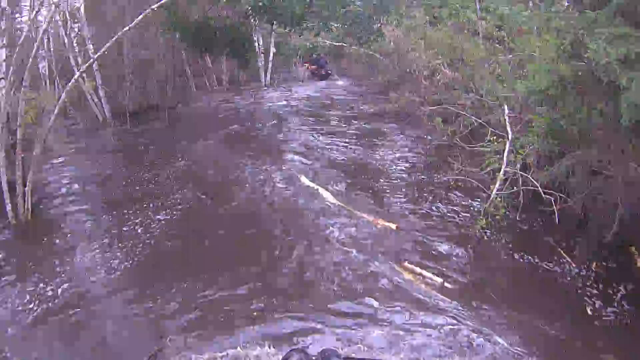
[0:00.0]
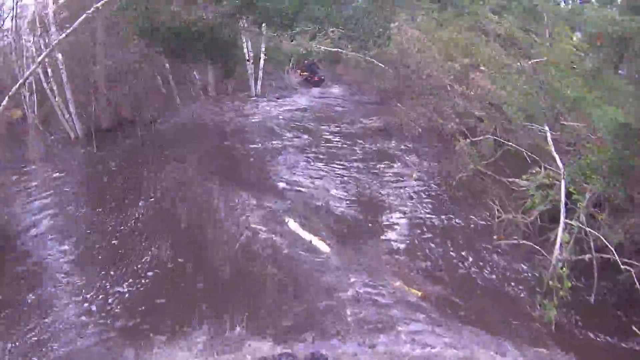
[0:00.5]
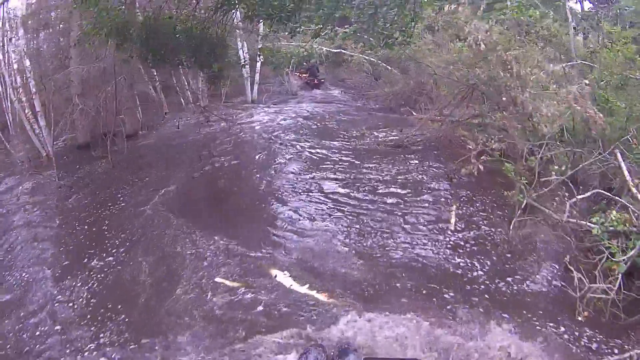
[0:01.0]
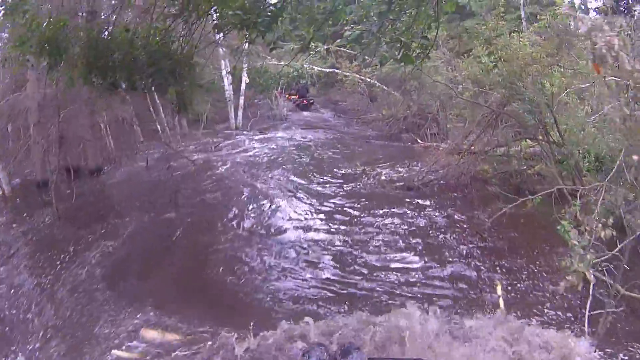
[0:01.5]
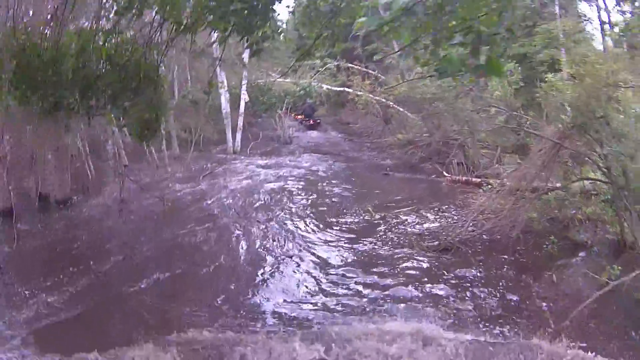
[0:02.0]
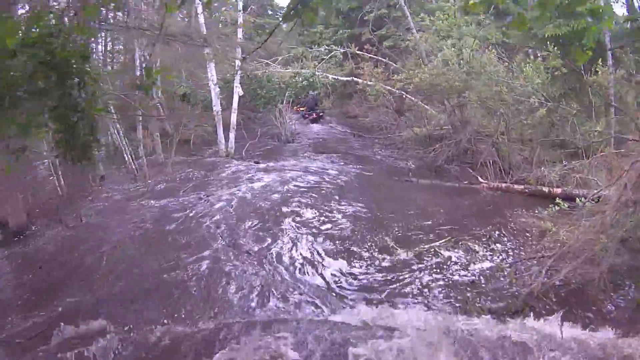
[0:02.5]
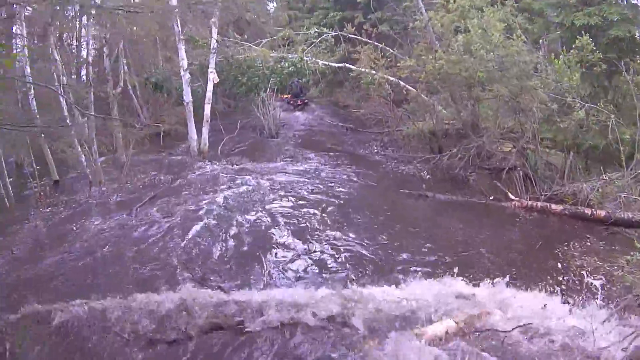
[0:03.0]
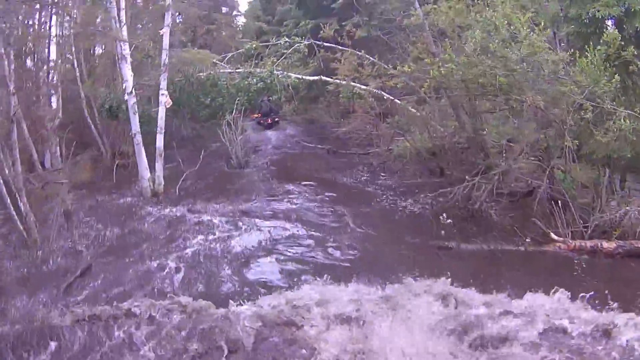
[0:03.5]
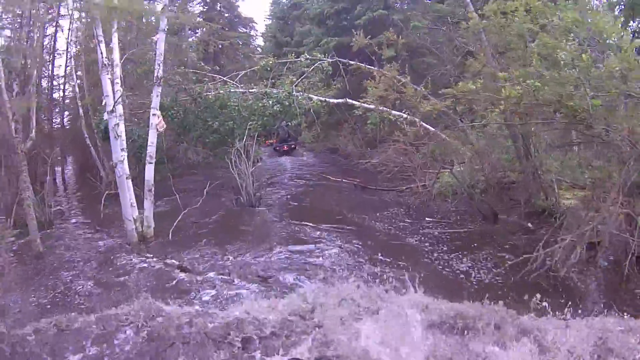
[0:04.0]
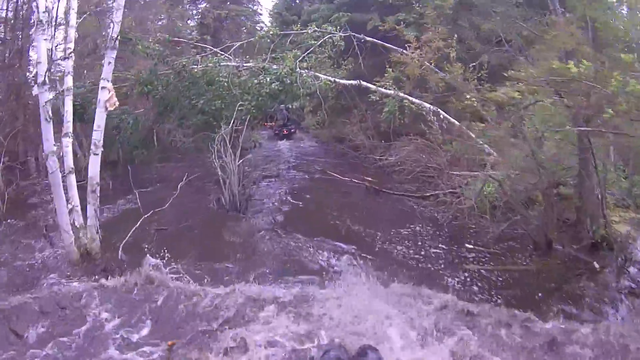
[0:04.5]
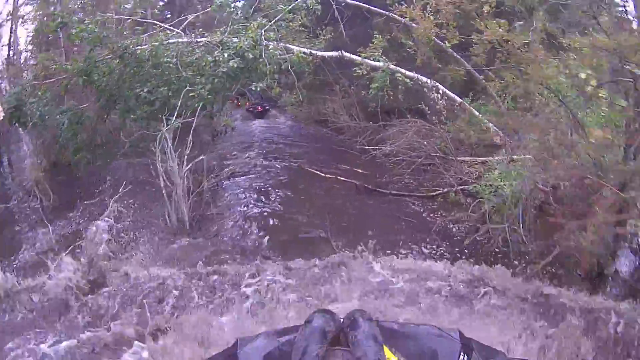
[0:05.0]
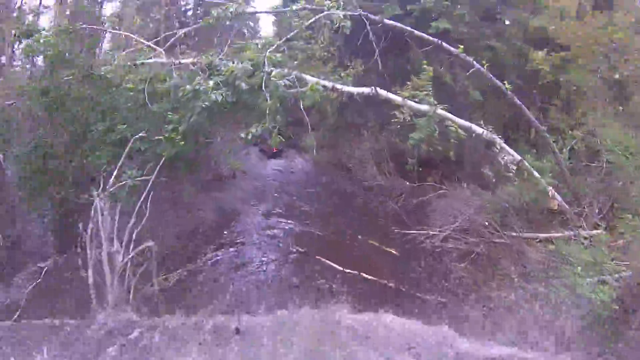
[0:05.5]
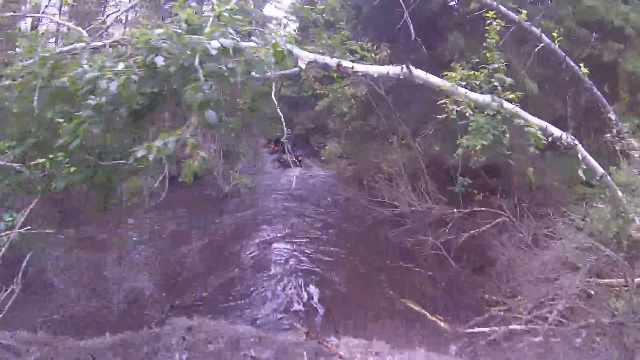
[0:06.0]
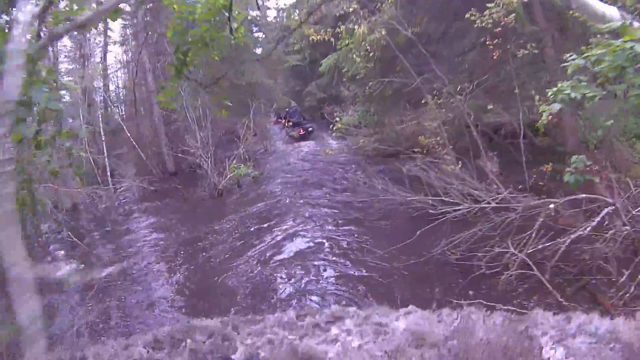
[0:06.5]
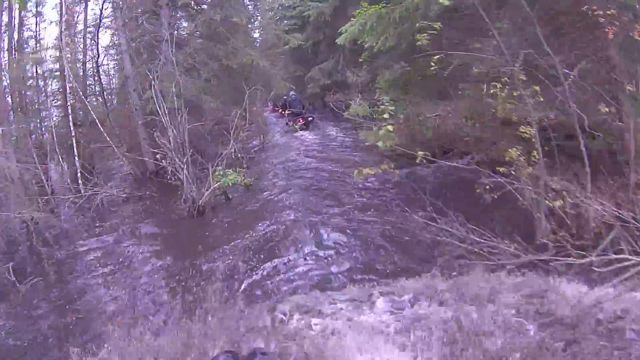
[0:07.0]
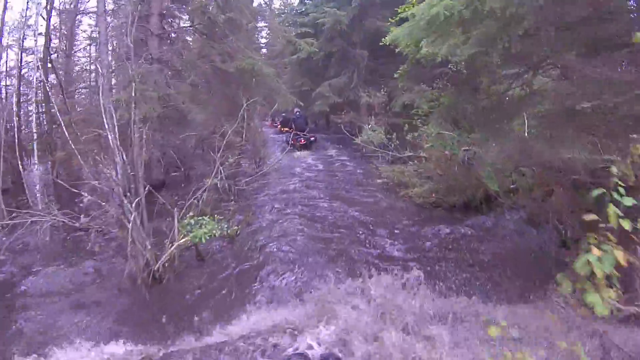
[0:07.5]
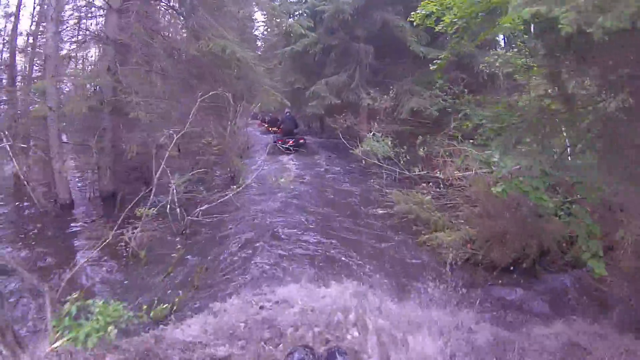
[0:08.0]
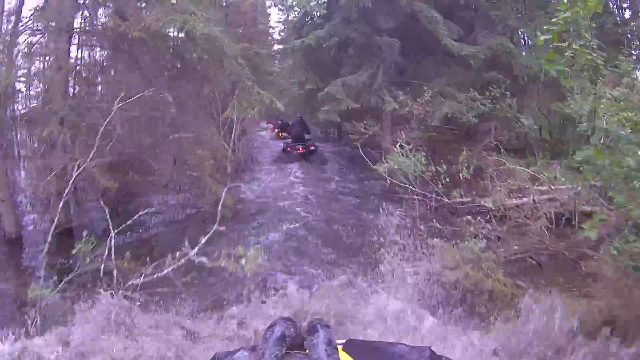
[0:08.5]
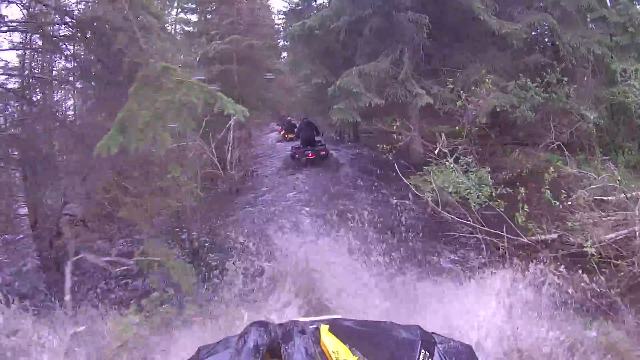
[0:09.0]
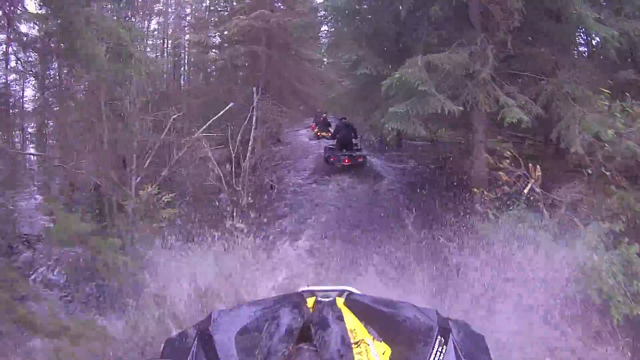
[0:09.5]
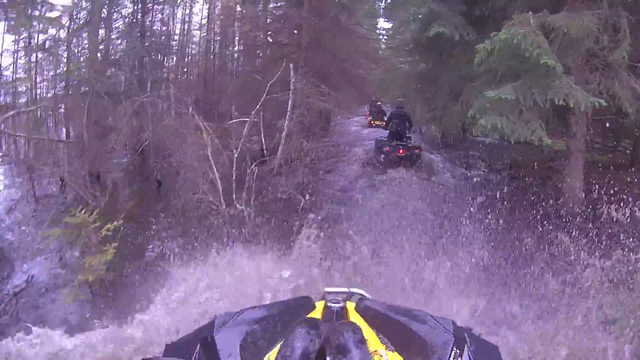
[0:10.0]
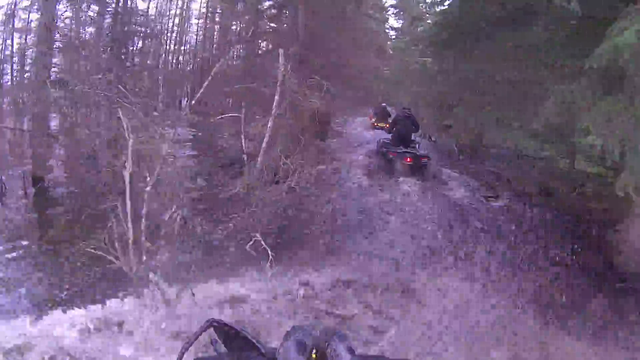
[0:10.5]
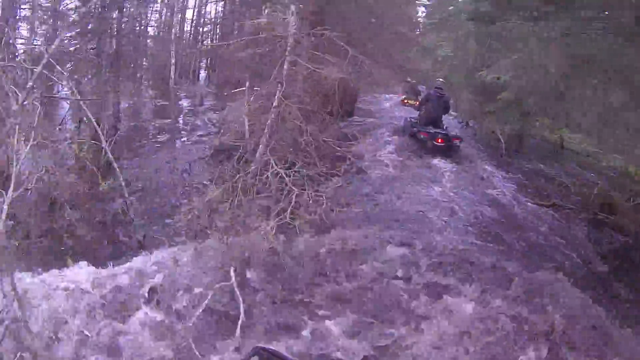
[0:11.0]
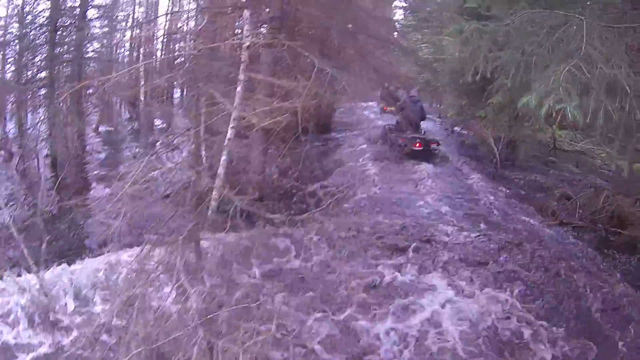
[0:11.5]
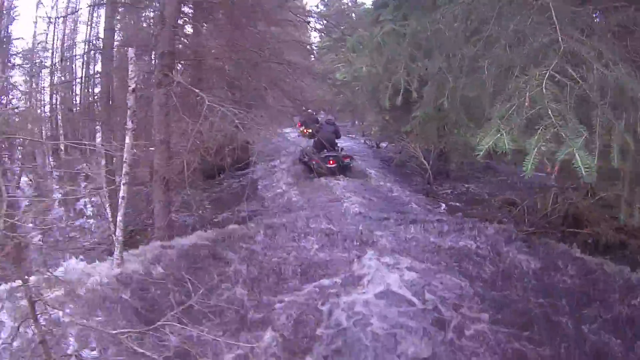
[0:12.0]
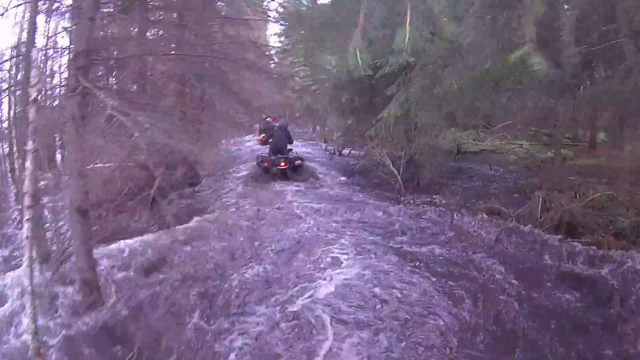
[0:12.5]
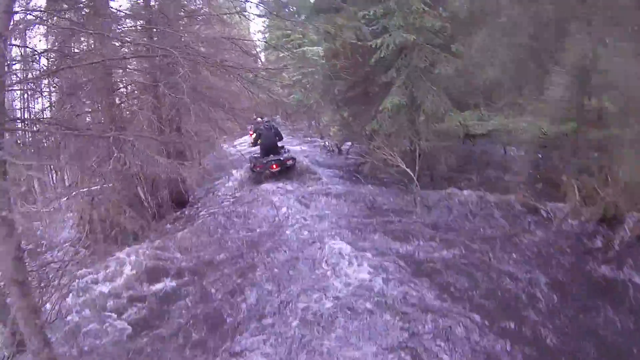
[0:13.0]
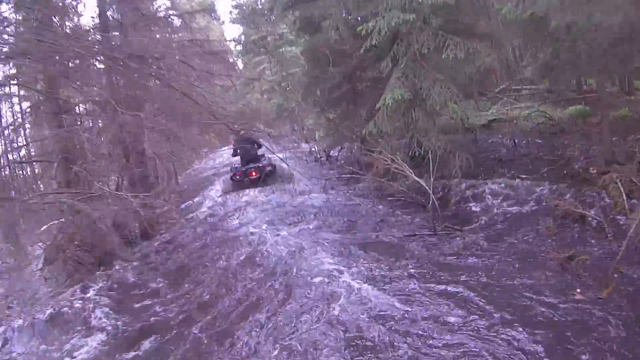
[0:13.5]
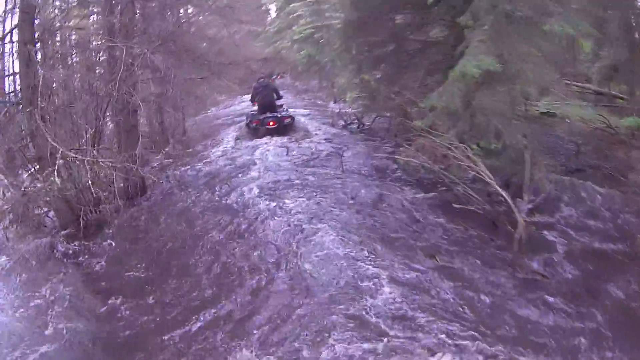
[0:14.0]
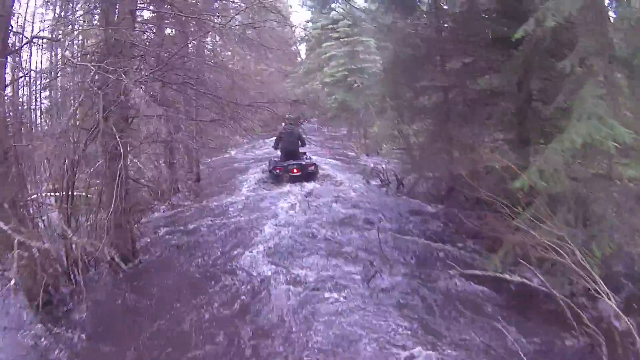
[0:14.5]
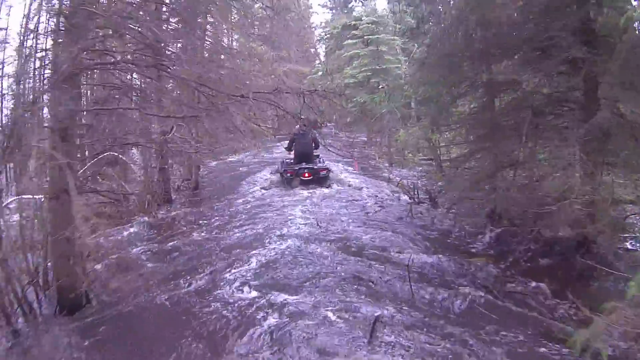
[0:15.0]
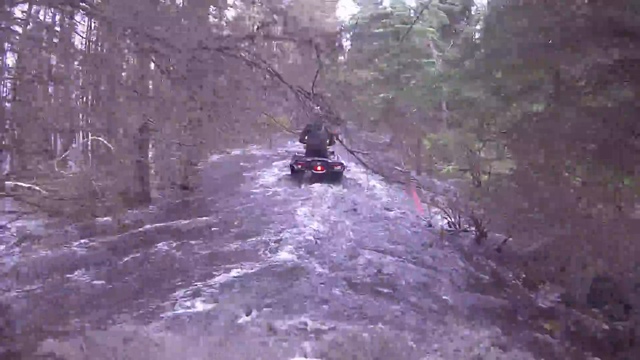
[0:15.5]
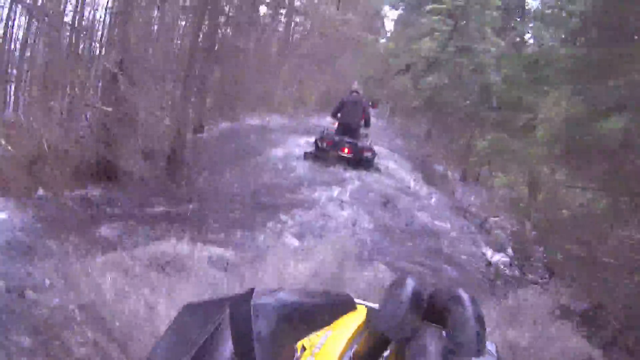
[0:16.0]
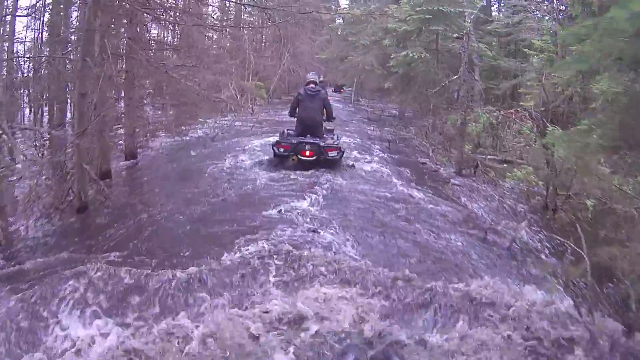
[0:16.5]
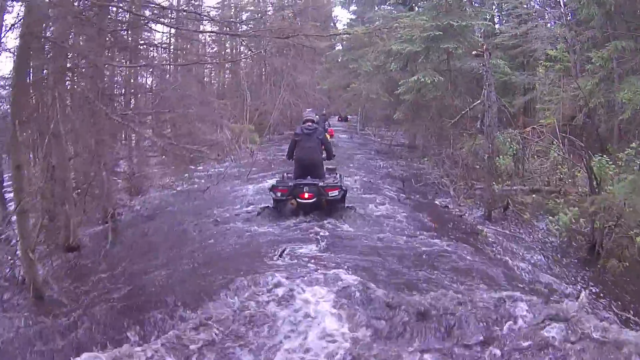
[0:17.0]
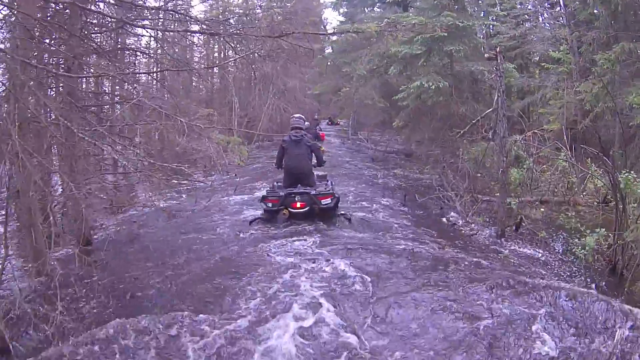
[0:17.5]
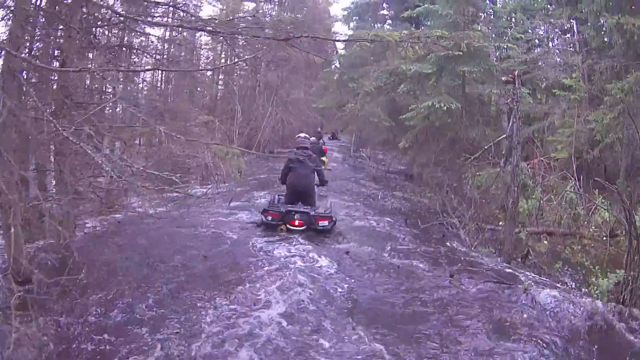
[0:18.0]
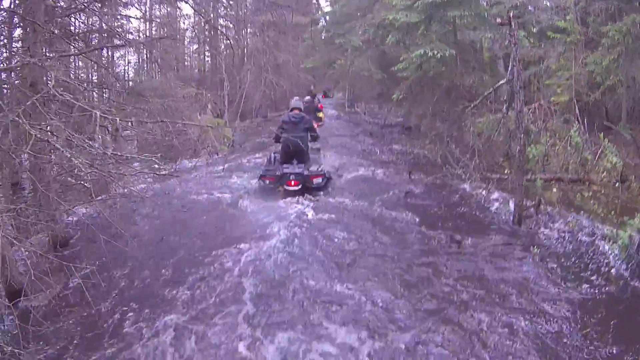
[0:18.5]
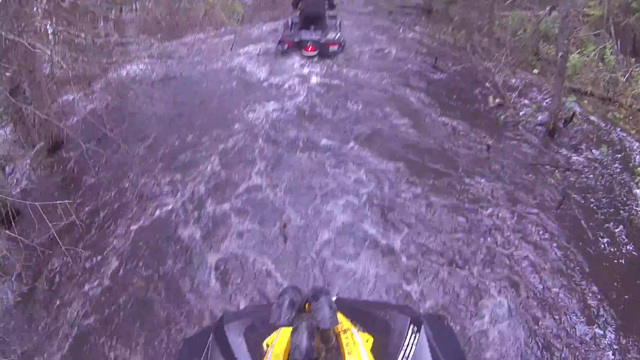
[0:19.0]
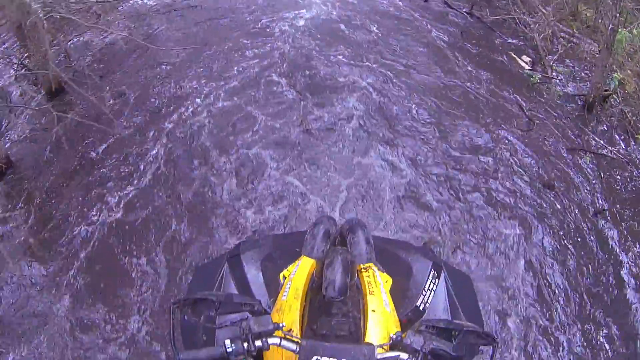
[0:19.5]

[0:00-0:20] The scene appears to be a creek somewhere in the woods, possibly somewhere like Texas or North Carolina. The area is very heavily wooded and looks kind of swampy. The water is very brown and dark. It looks like it could be a flood: there are lots of sticks and branches in the water, and what comes out of the water does not appear to be the bottom of the trees, as if this was usually land. Big logs are kind of floating by, and many tree branches and roots are heavily bent over. The camera appears to film from the view of someone on a boat or something, moving through this murky, muddy water. It looks like it was a trail that has turned into water, and the people on it ride small boat-like vehicles, sort of like jet skis, though it is hard to tell. One guy is following two others.